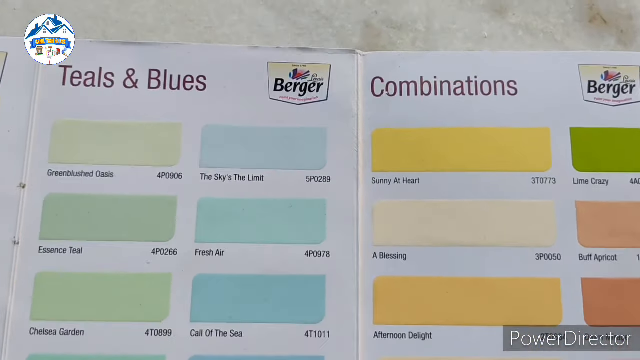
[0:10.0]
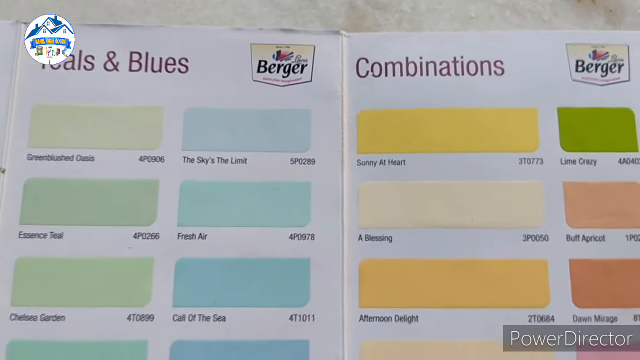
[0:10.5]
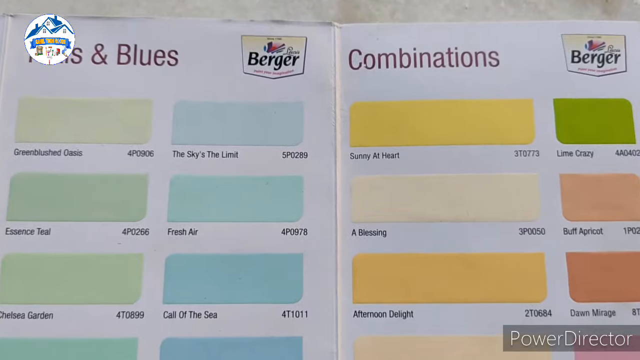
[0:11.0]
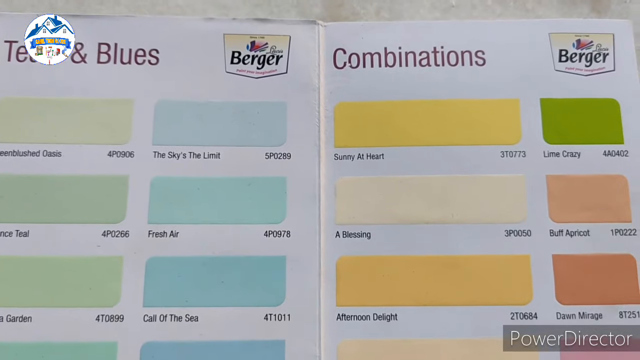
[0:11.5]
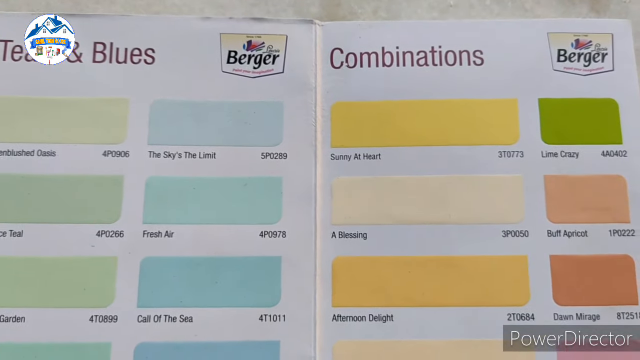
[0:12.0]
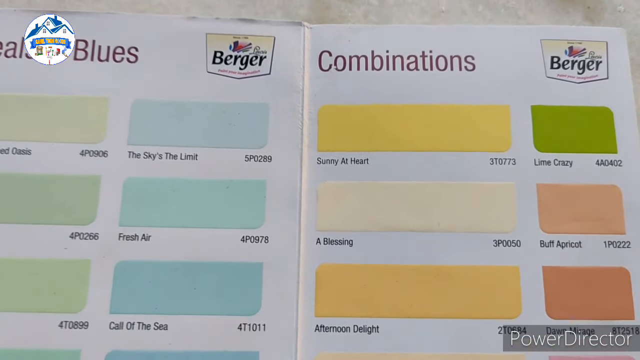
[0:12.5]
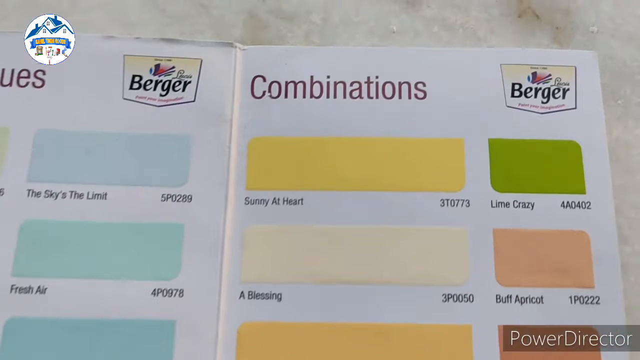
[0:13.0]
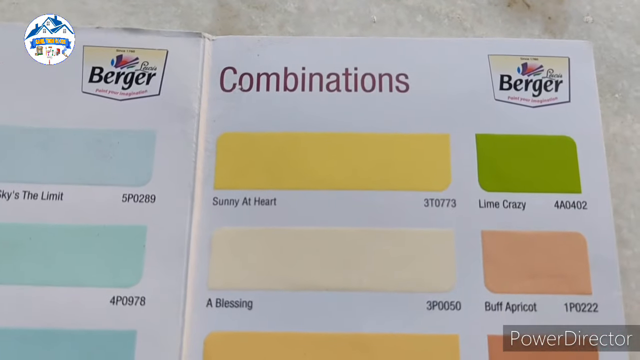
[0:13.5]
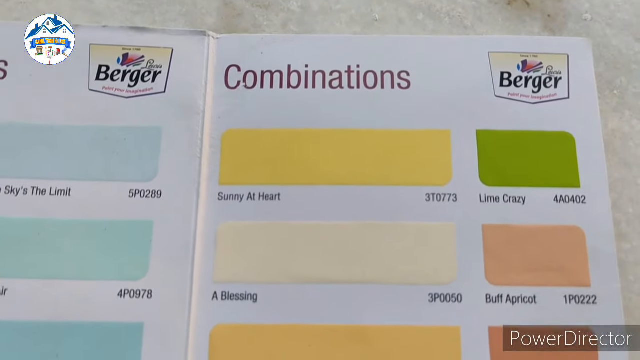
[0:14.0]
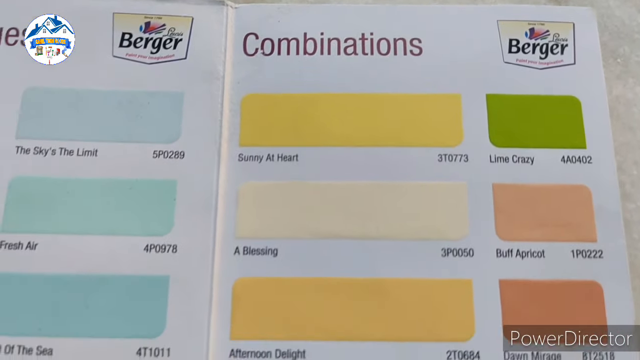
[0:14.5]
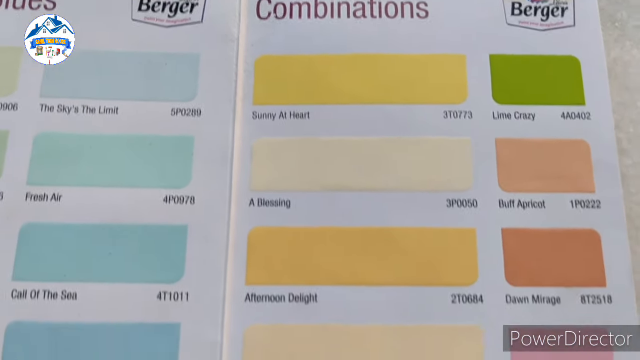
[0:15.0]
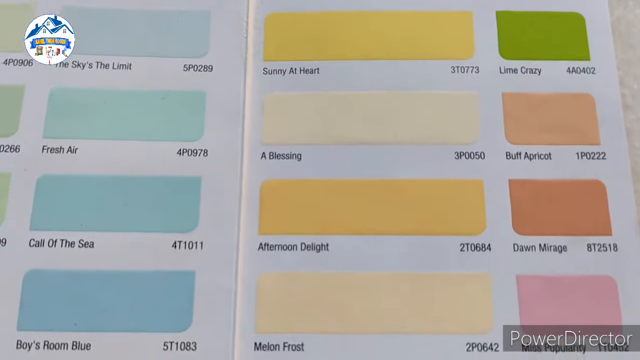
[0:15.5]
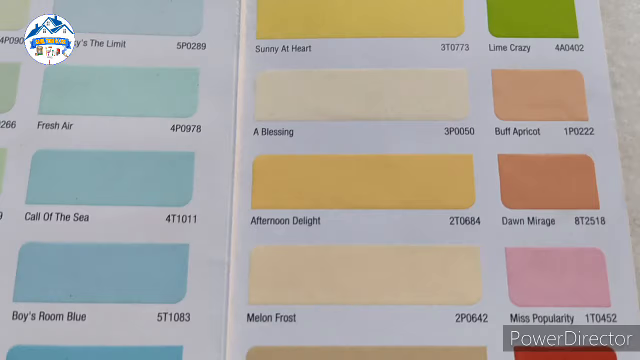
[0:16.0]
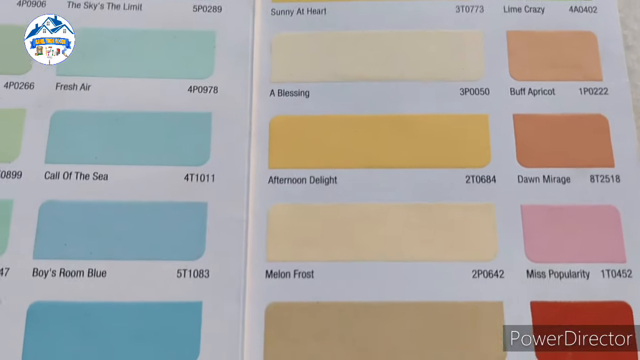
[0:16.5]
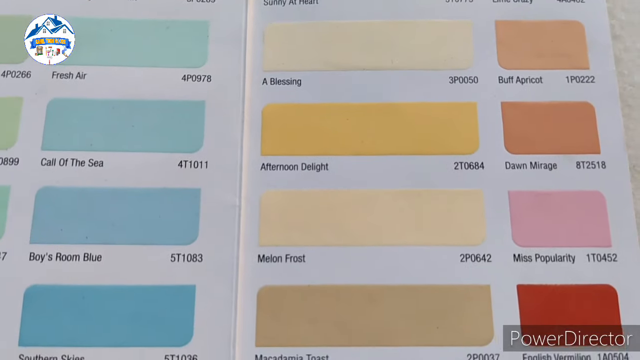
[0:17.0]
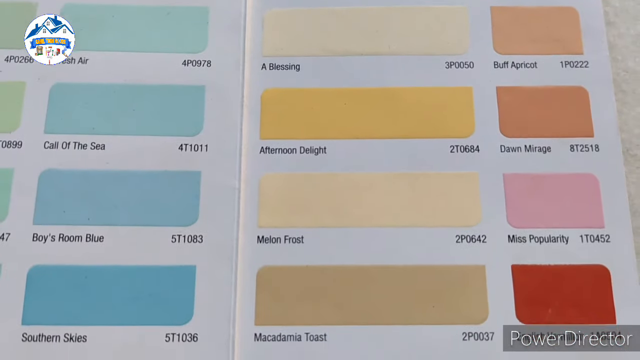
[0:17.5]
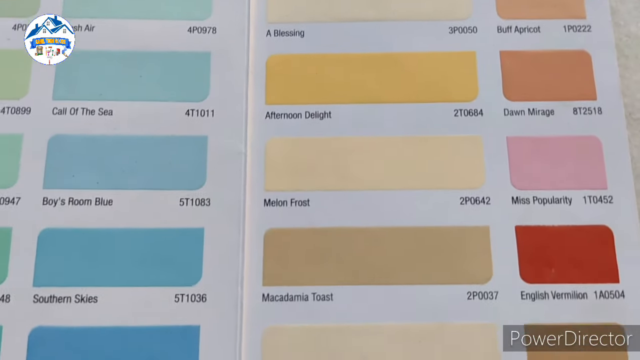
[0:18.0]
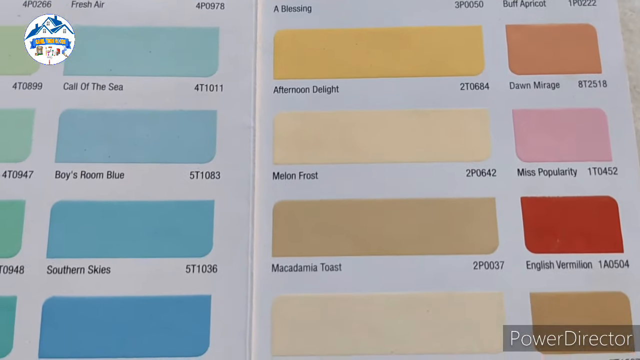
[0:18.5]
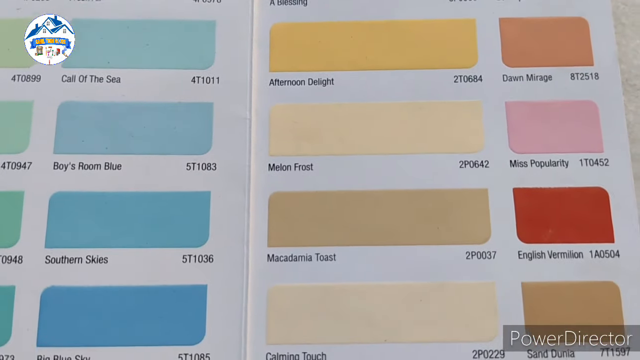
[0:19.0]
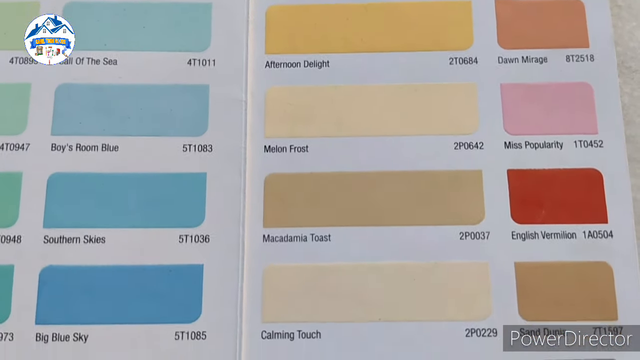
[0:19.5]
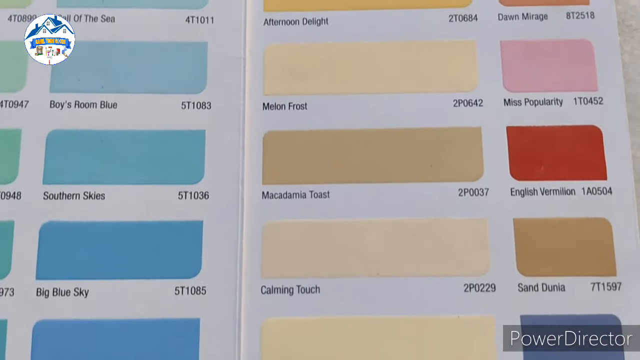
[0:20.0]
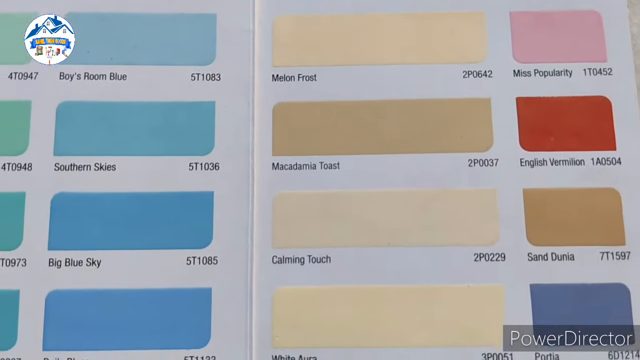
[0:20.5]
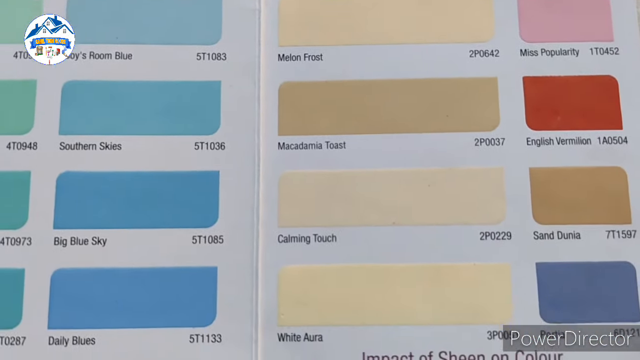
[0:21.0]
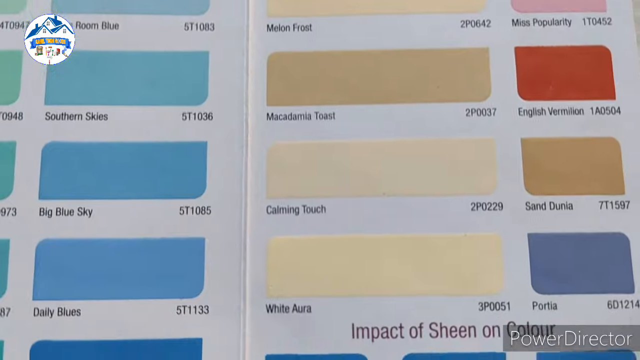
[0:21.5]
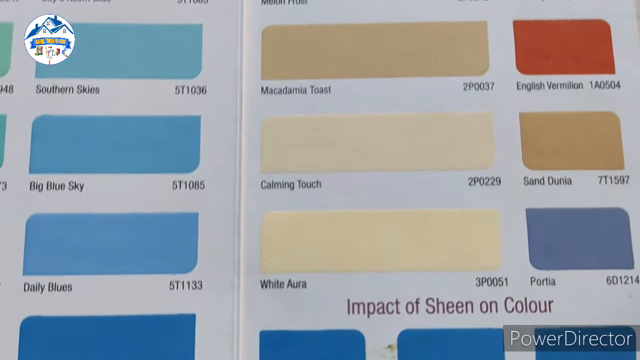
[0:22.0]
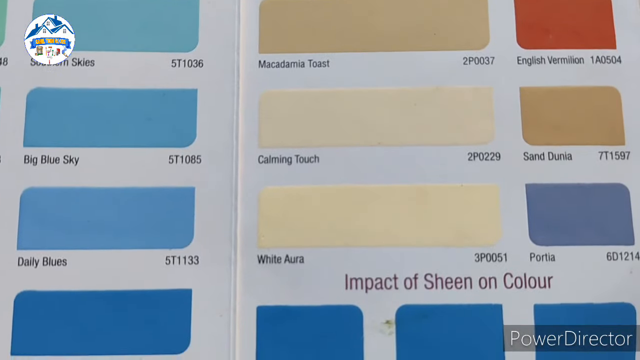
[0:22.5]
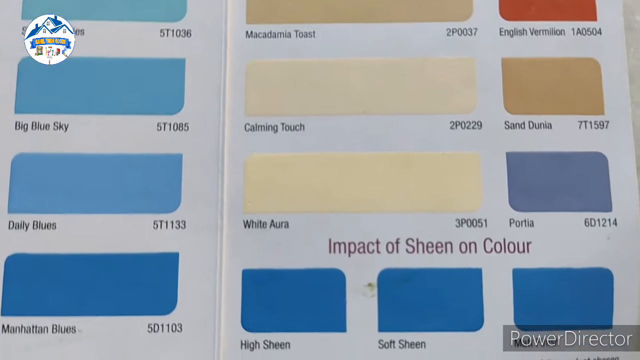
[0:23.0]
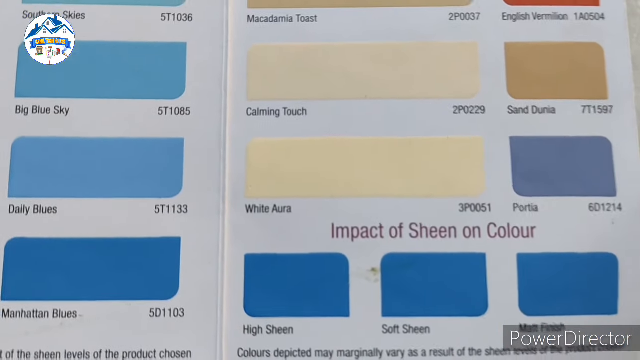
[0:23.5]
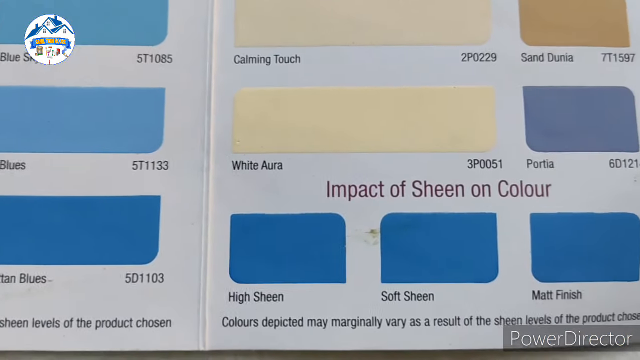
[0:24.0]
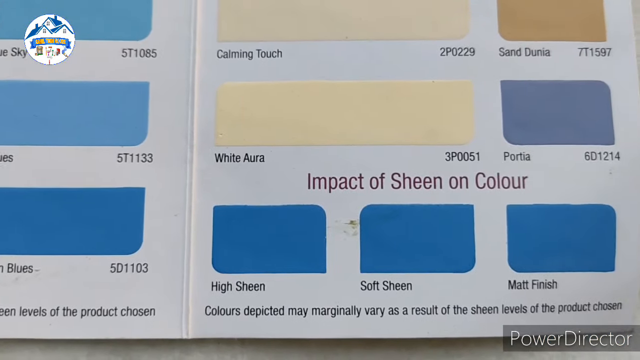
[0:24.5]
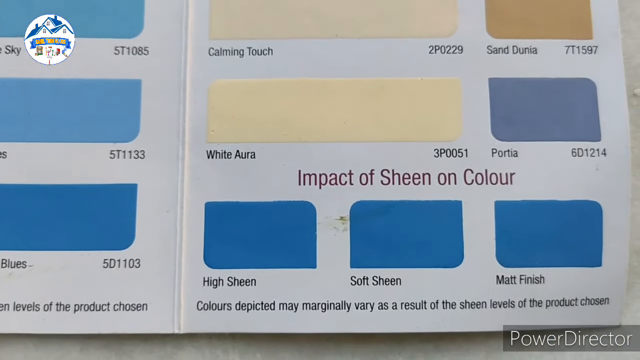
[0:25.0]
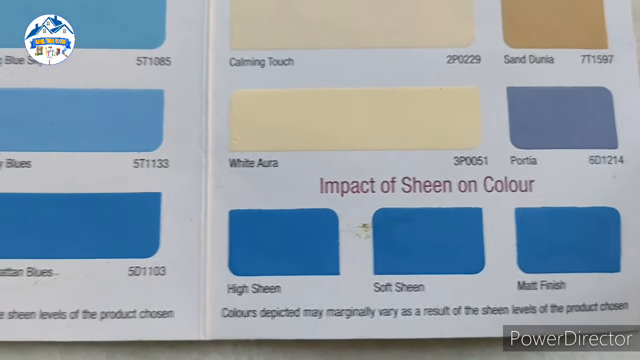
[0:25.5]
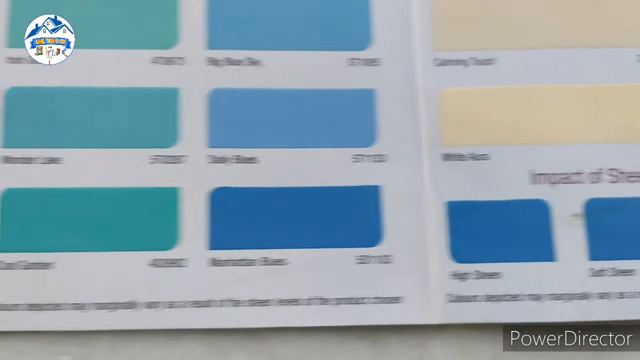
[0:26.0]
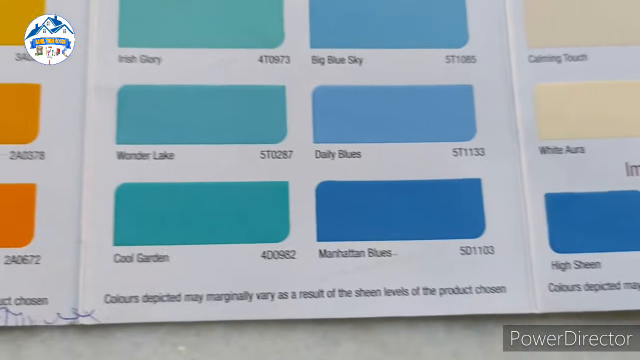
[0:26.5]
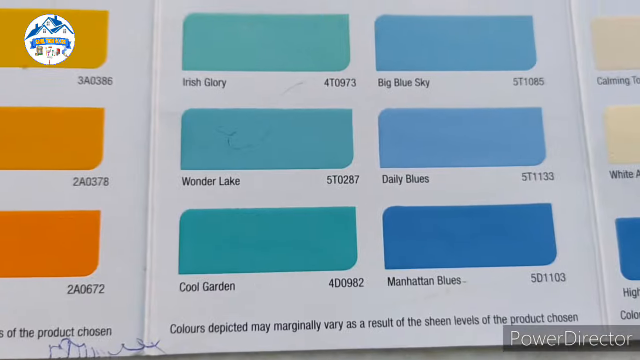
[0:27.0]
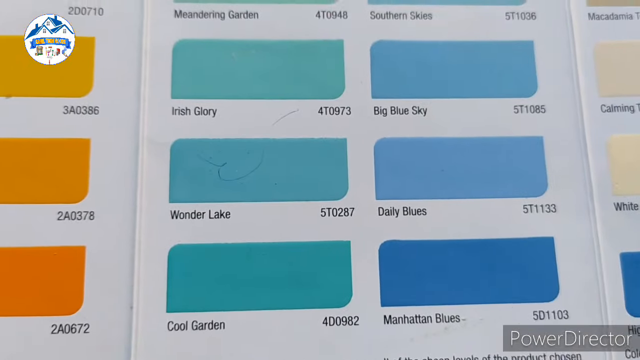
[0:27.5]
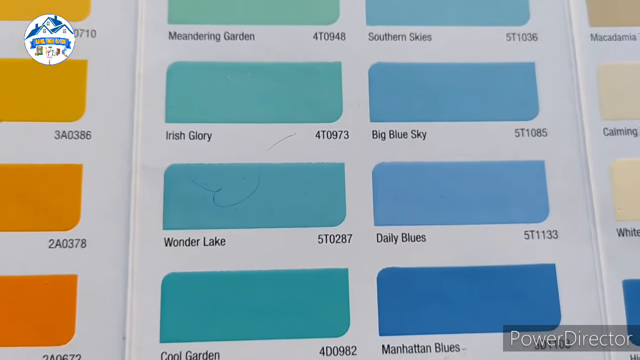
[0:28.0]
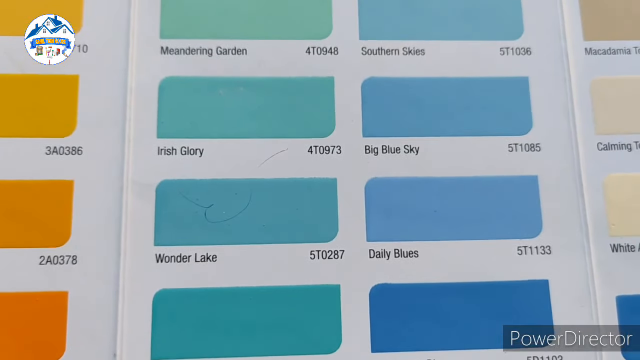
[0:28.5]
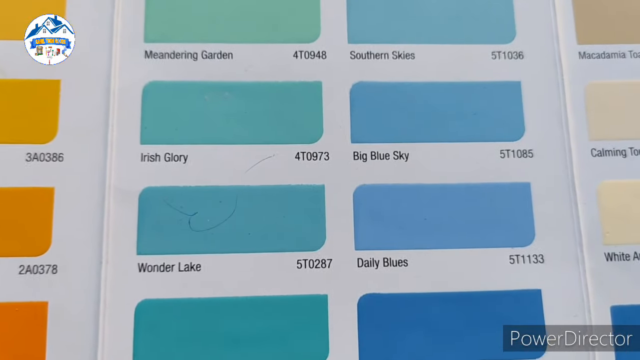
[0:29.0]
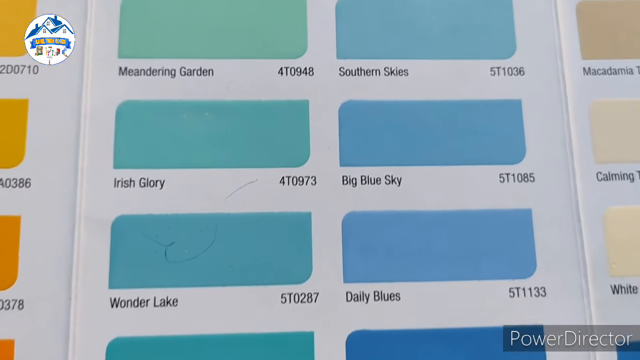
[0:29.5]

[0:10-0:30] The view is zoomed in on the teals and blues and the combinations section of the paint samples, which has a variety of colors. Many of them are yellow, and to the side are different shades: one is a lime color, another is more orange, and there are pink, red and brown tones. At the bottom the text reads "impact of sheen color" with three options: "high sheen", "soft sheen" and "matte finish". The view then moves to the other teals and blues section, showing more blue and lighter colors. One sample, Wonder Lake, appears to have writing on it from a pen, apparently in a darker color. The samples also have numbers, likely identifiers for the paint colors. The samples are on a white background in what appears to be a store.